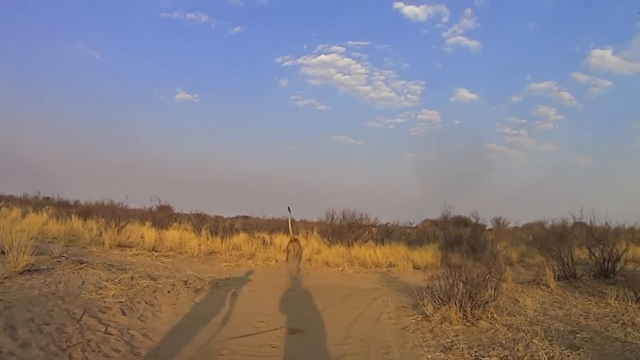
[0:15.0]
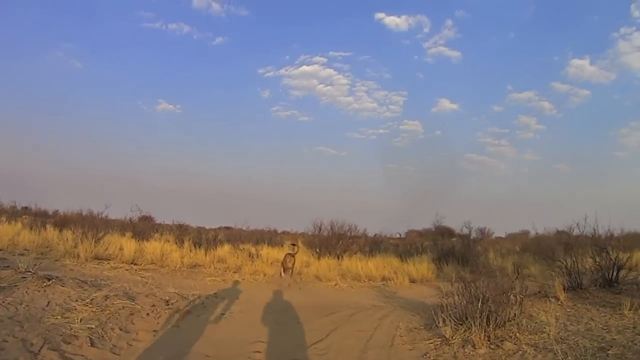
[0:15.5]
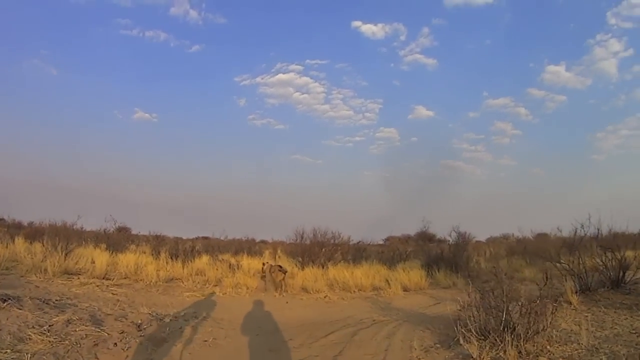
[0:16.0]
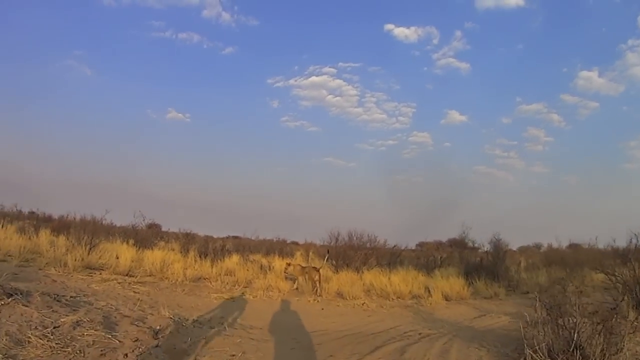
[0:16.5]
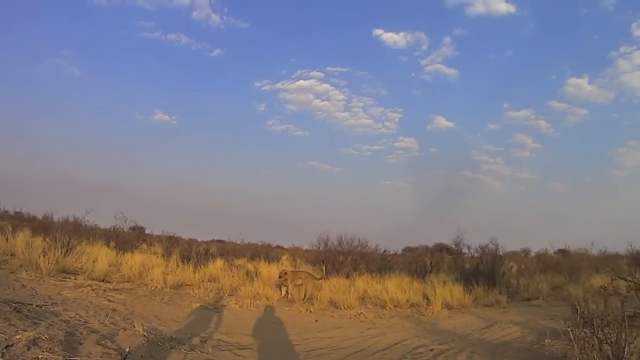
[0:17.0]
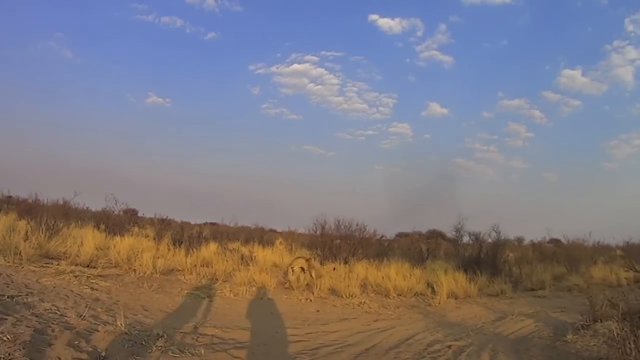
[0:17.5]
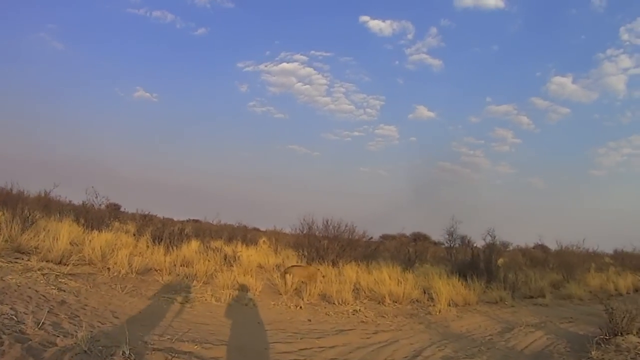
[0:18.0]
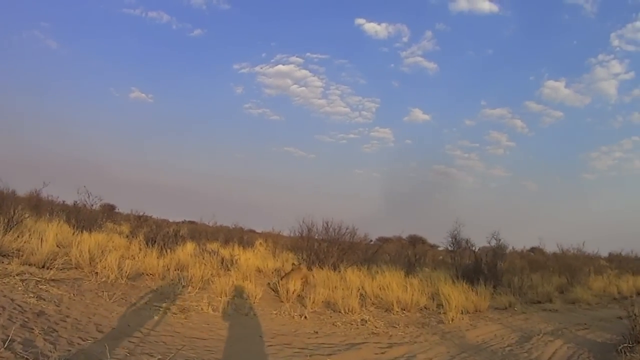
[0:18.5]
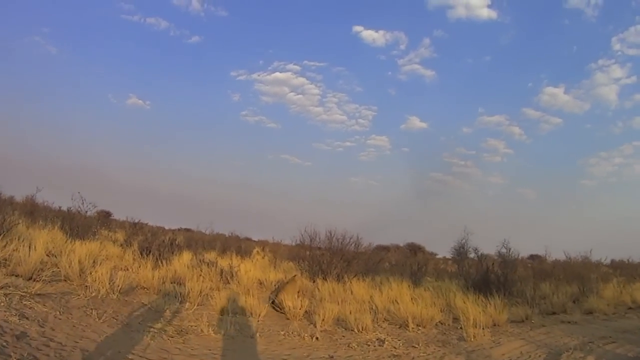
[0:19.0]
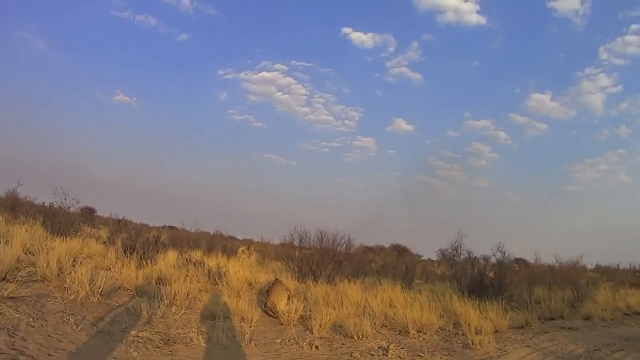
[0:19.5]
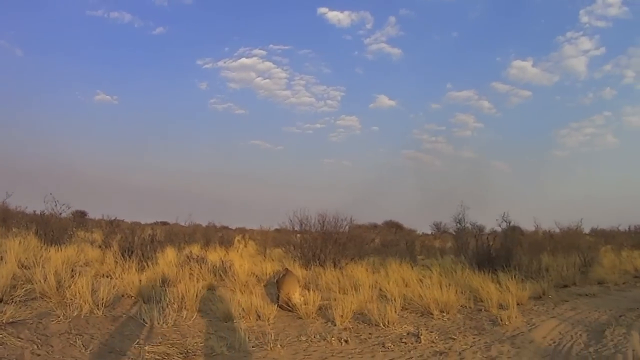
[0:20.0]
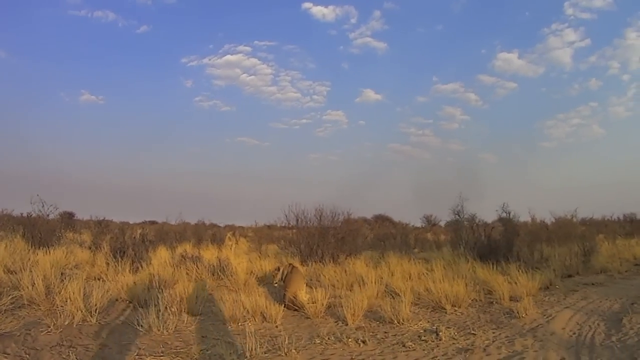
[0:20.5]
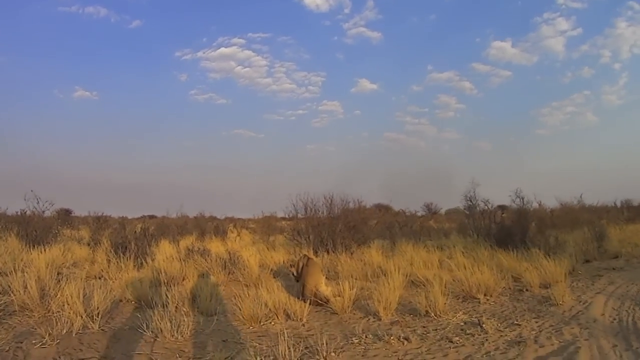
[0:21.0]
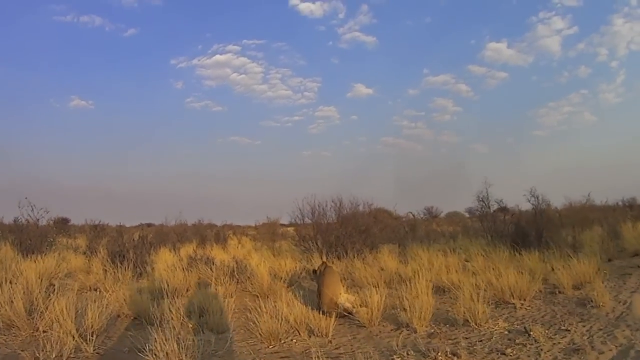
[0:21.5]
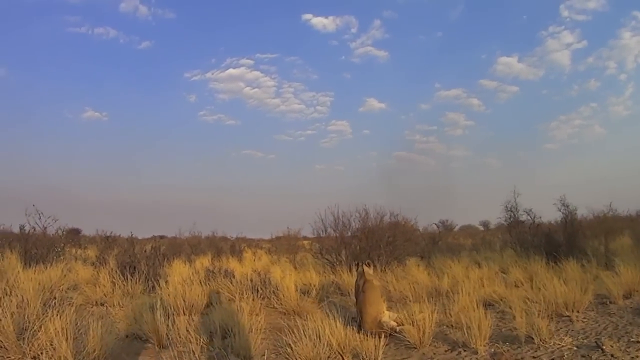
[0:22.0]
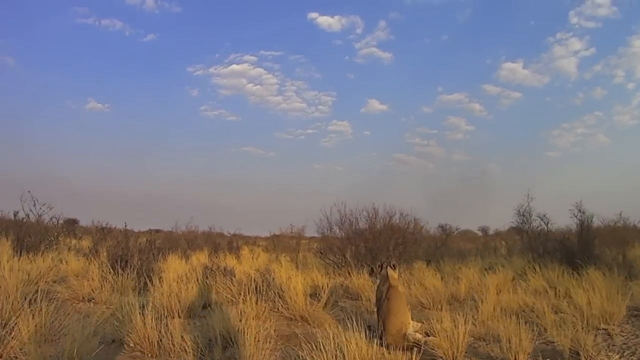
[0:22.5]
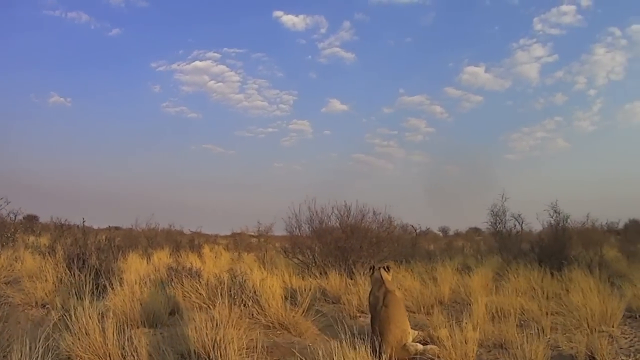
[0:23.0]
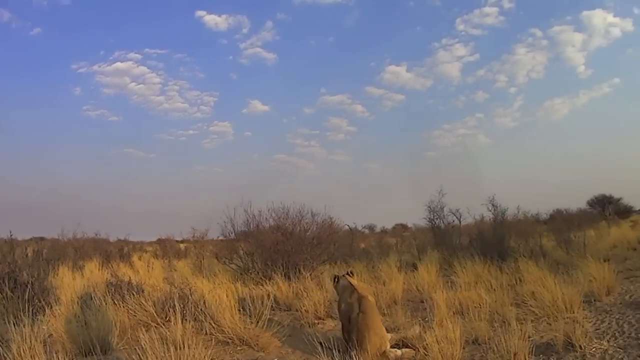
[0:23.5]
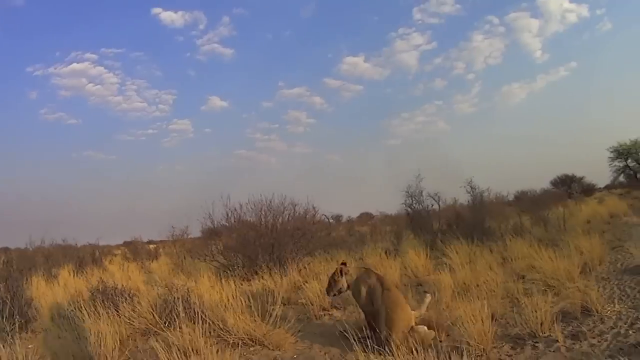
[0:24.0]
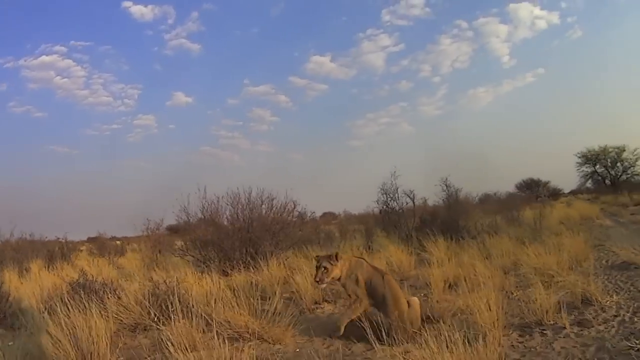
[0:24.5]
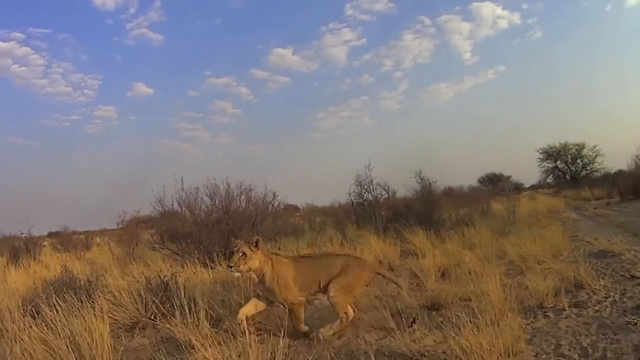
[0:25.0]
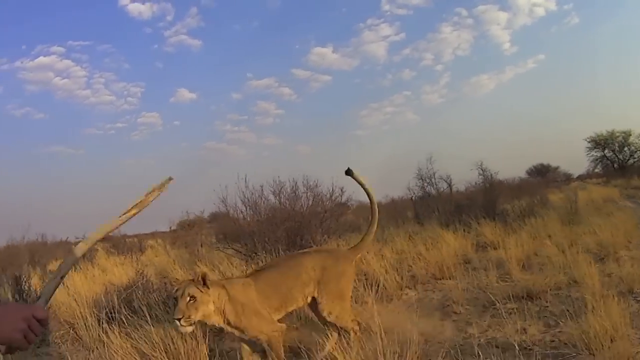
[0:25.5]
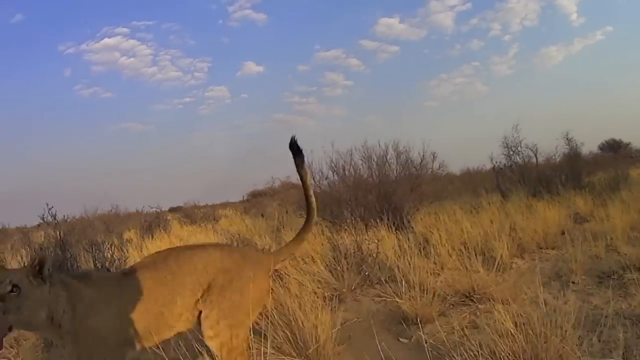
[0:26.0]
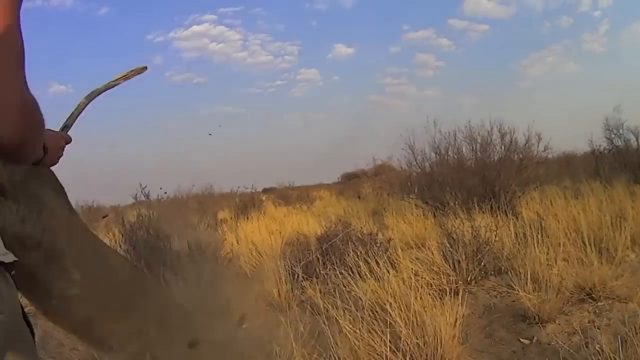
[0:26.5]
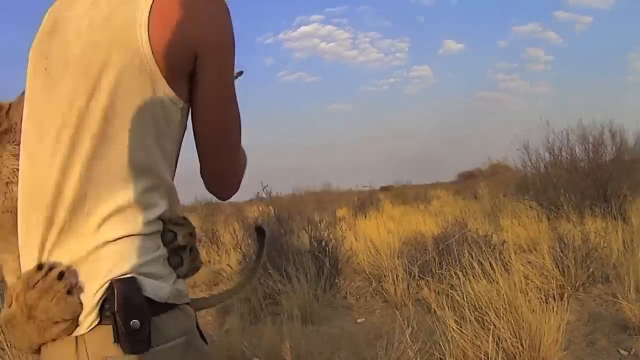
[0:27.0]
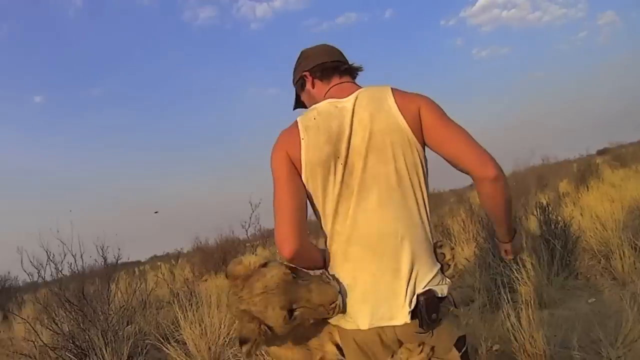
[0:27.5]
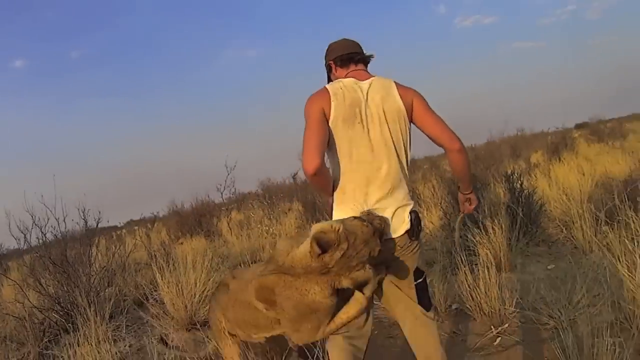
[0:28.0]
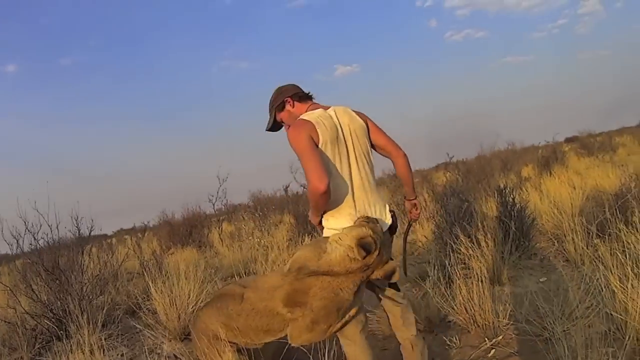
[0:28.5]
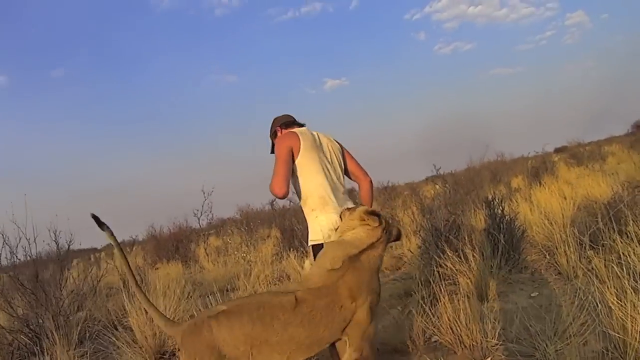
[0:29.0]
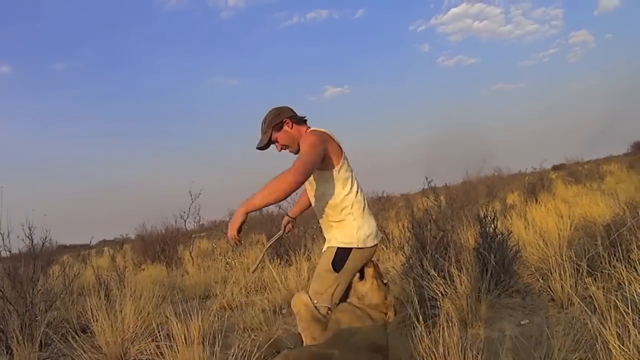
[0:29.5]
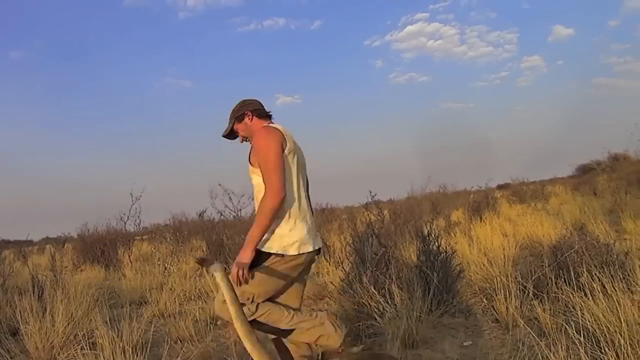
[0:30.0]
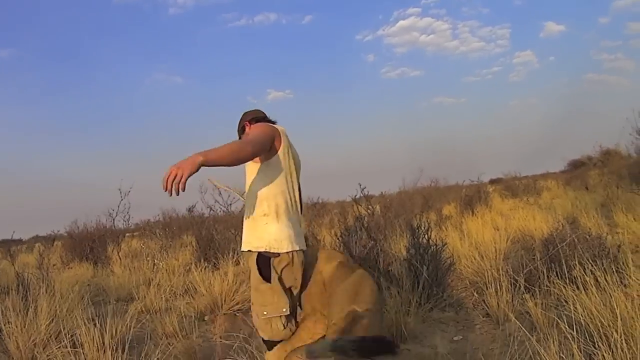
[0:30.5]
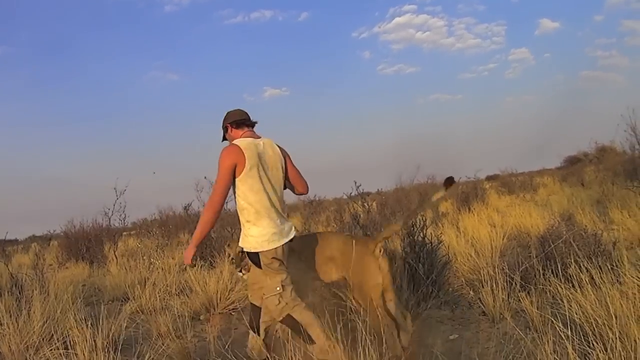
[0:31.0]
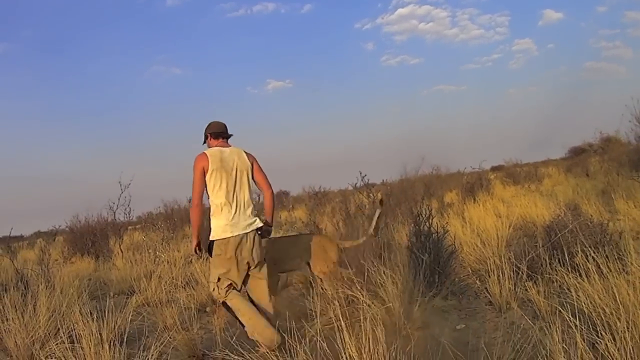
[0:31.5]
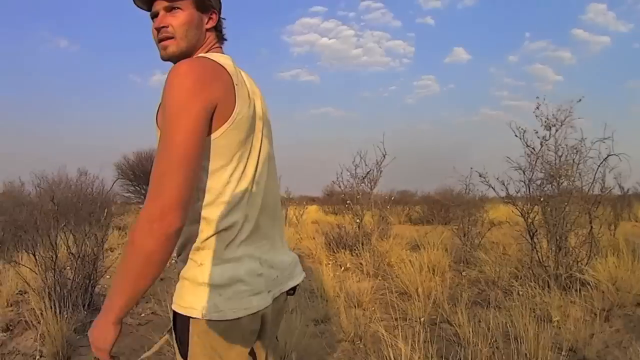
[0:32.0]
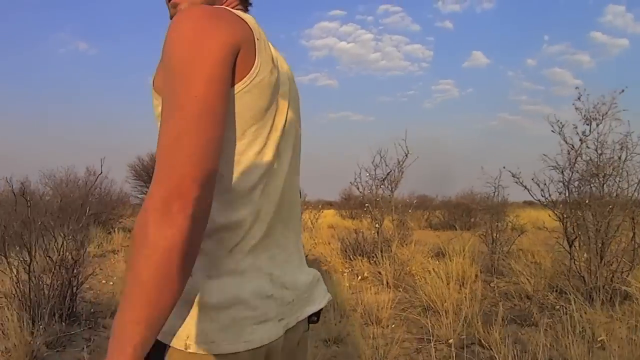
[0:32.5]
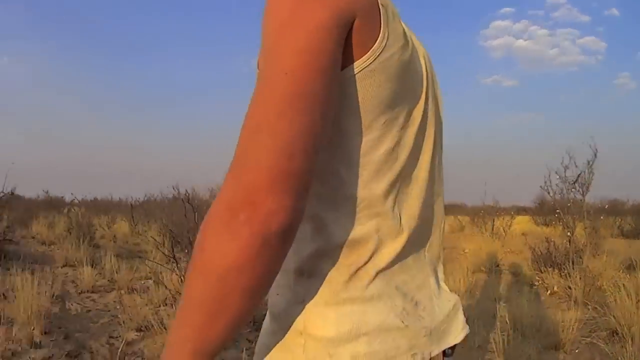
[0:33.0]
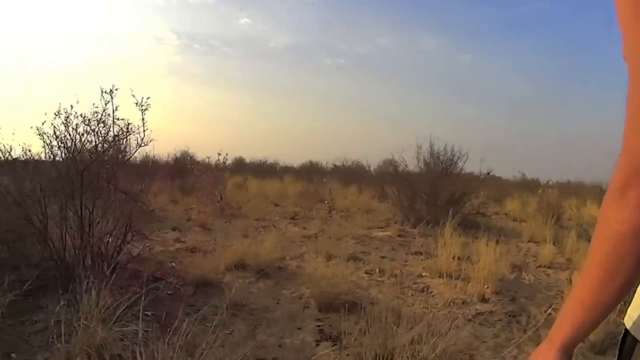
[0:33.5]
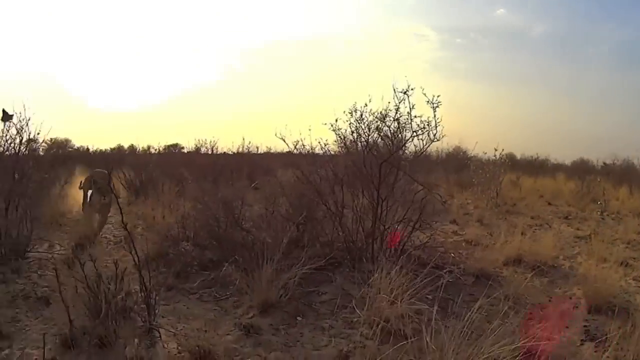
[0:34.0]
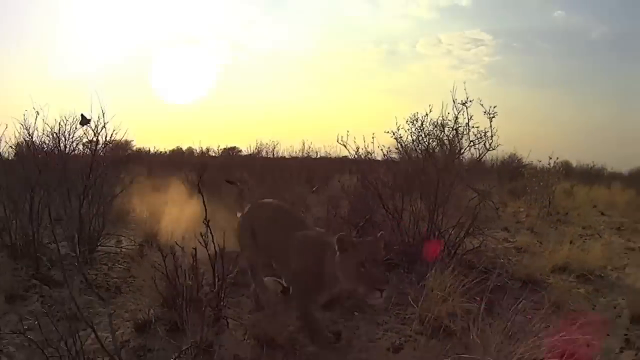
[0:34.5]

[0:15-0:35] The lion and the man are out in a field, playing around with each other. The lion runs around freely, and the man's shadow is visible at times. It is still daytime, a sunny day with blue skies and white clouds. The field is sandy, with a desert-like appearance, and the man and the lion are having fun together.